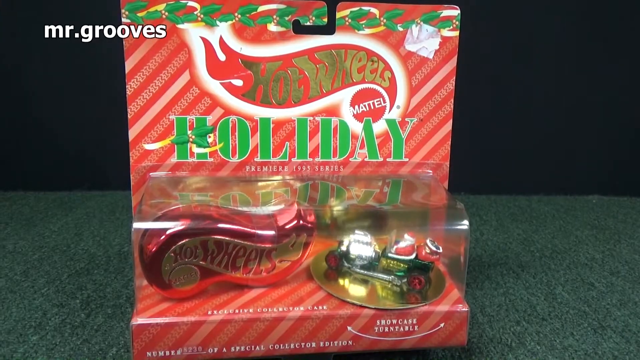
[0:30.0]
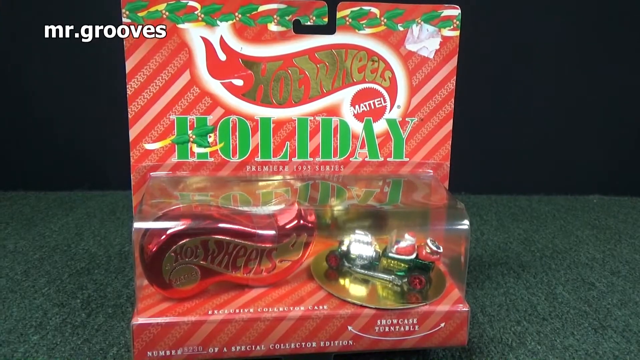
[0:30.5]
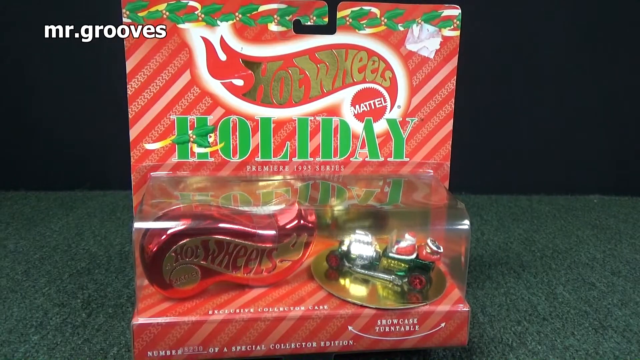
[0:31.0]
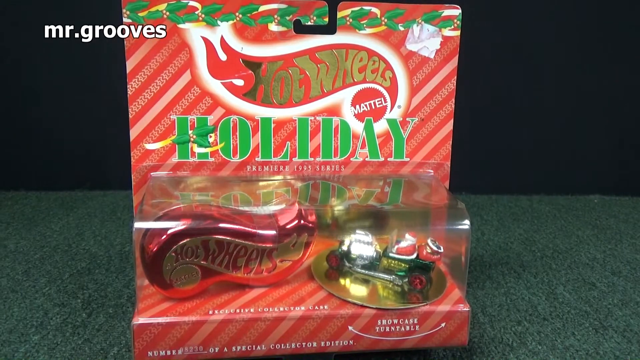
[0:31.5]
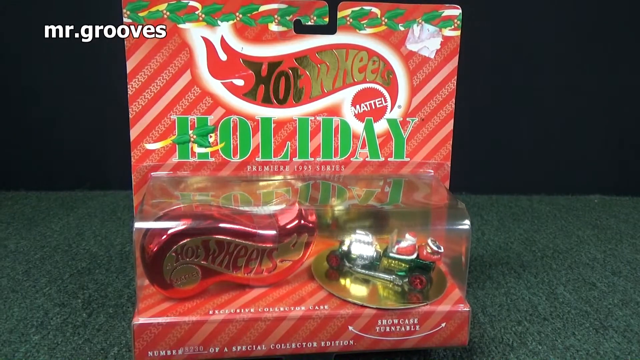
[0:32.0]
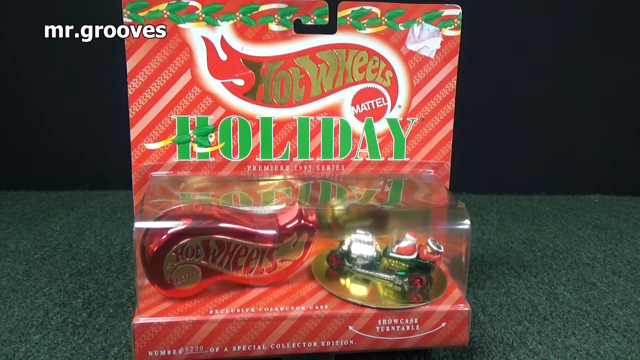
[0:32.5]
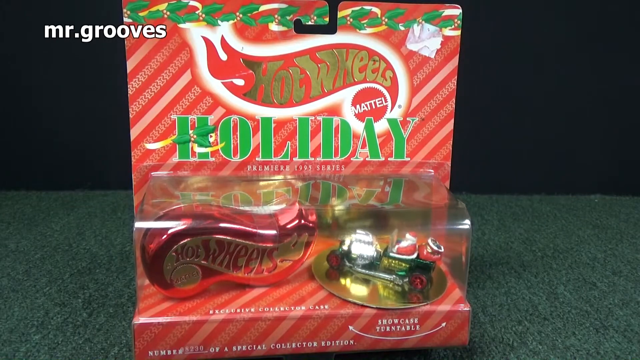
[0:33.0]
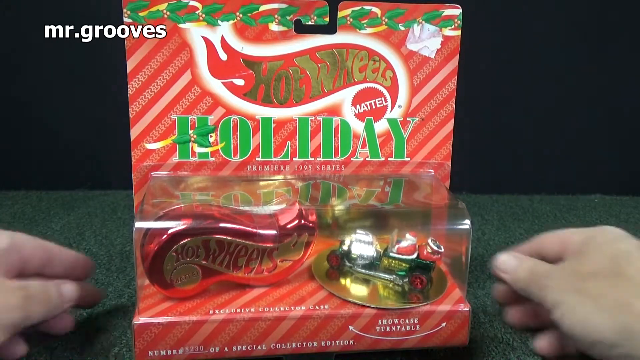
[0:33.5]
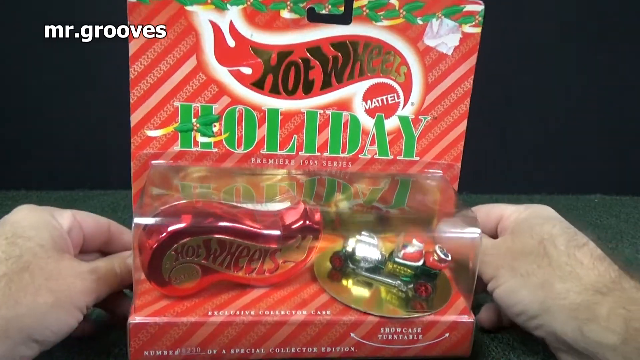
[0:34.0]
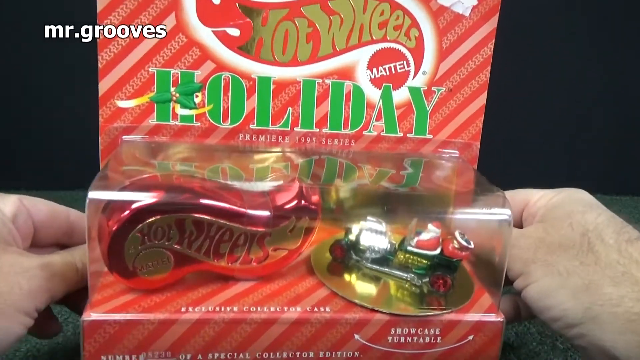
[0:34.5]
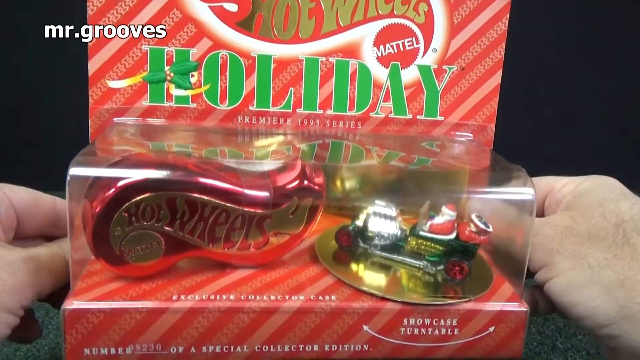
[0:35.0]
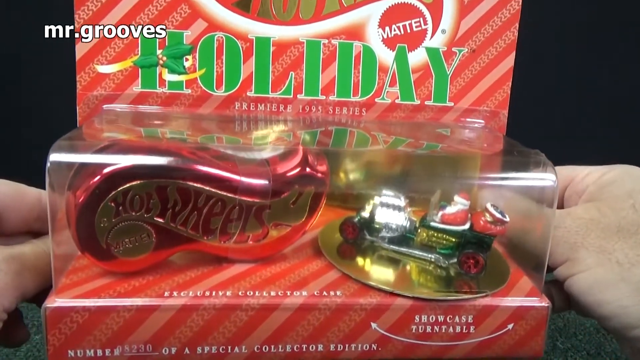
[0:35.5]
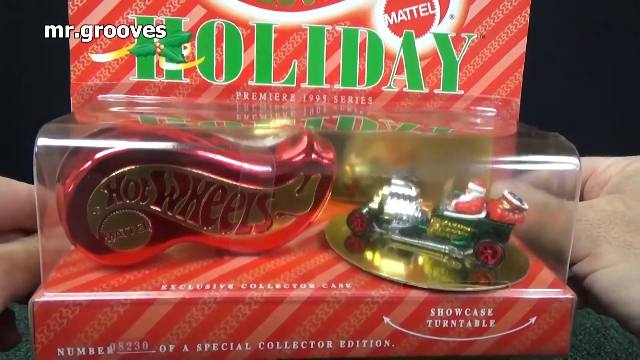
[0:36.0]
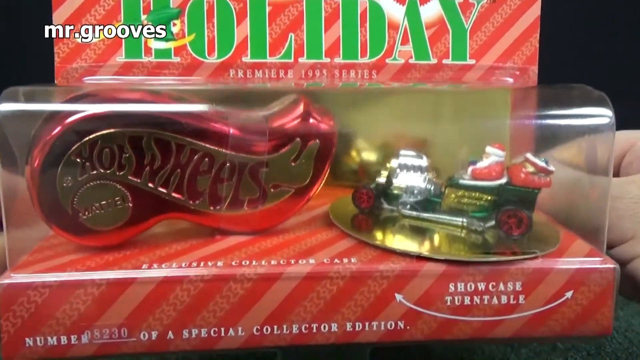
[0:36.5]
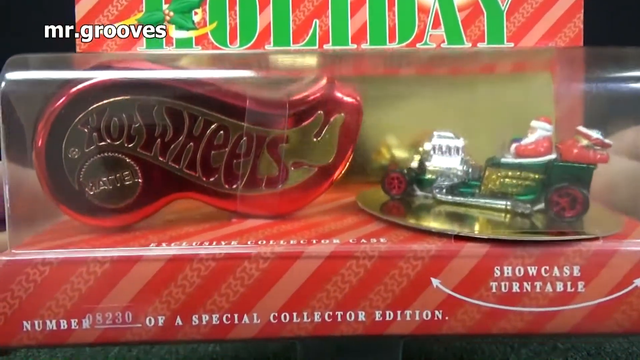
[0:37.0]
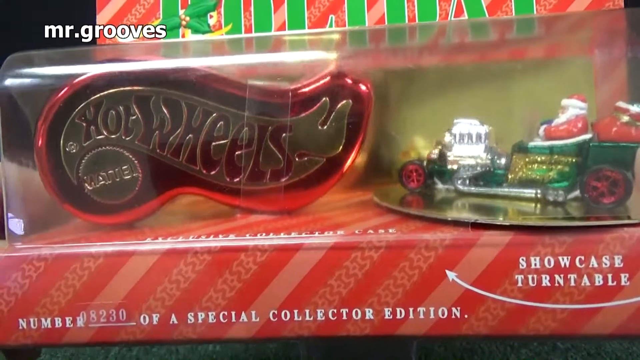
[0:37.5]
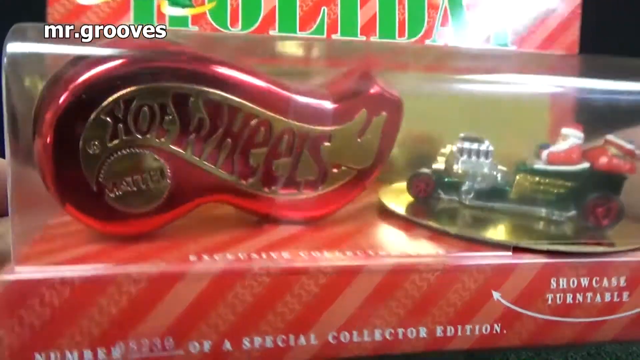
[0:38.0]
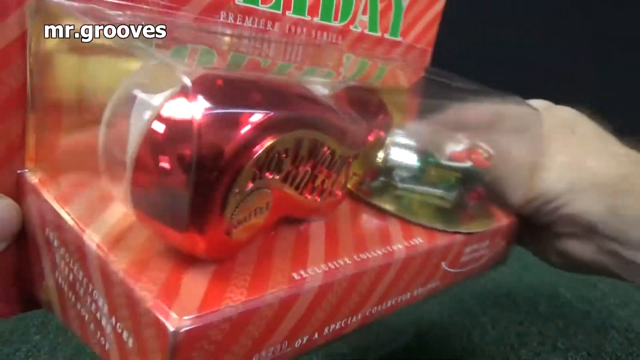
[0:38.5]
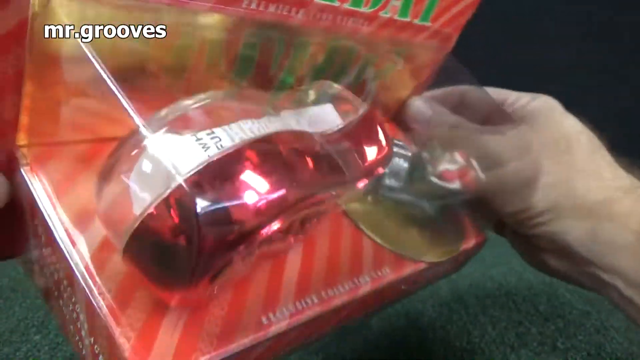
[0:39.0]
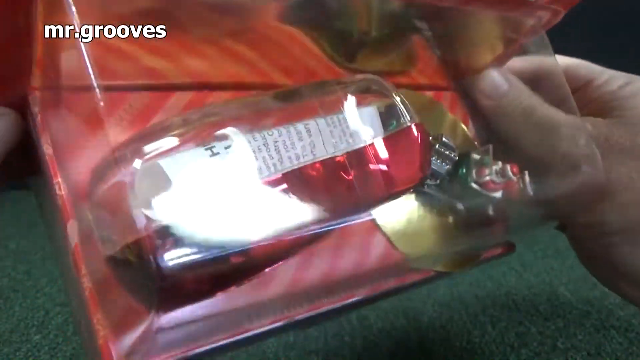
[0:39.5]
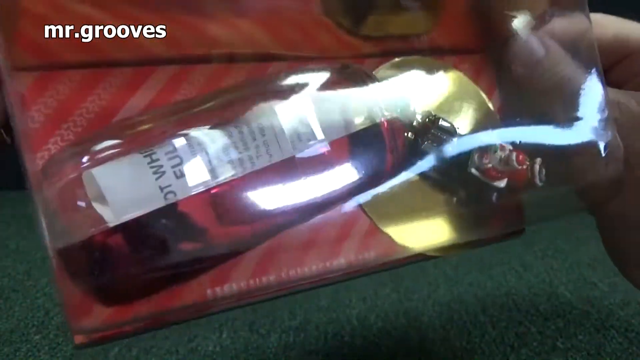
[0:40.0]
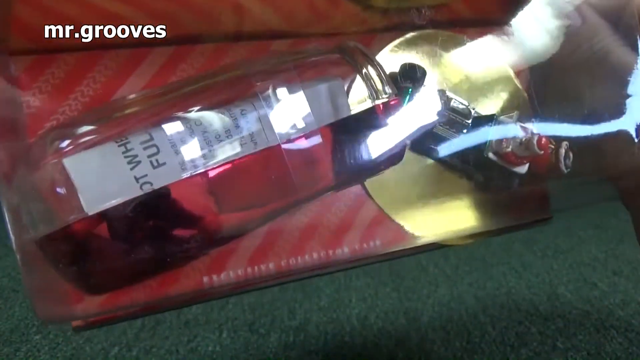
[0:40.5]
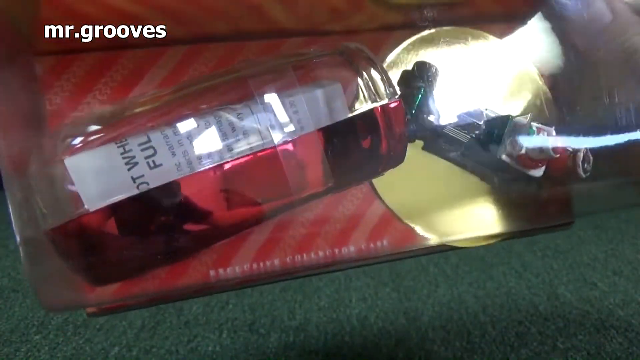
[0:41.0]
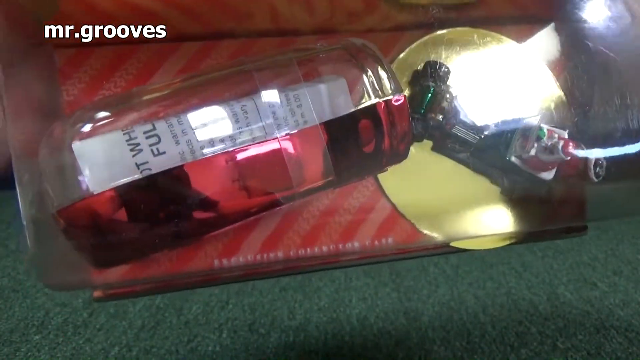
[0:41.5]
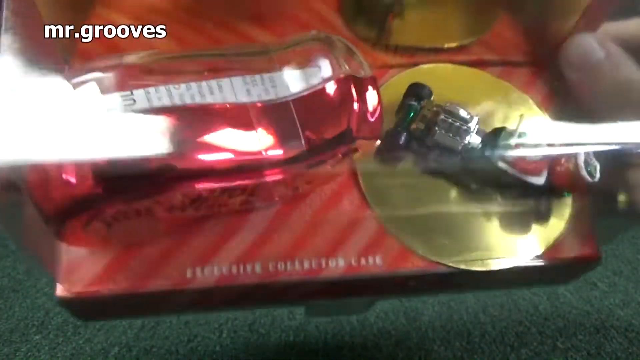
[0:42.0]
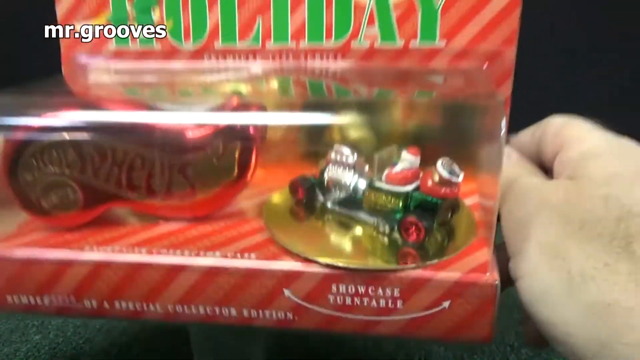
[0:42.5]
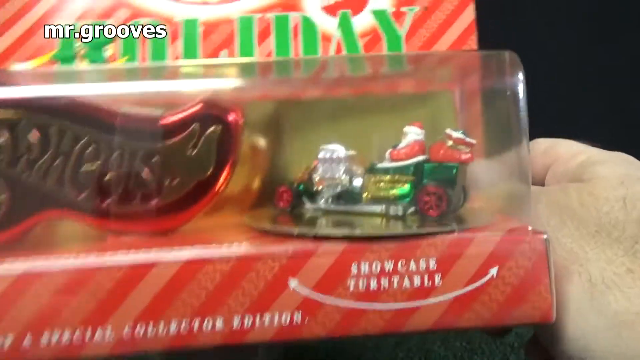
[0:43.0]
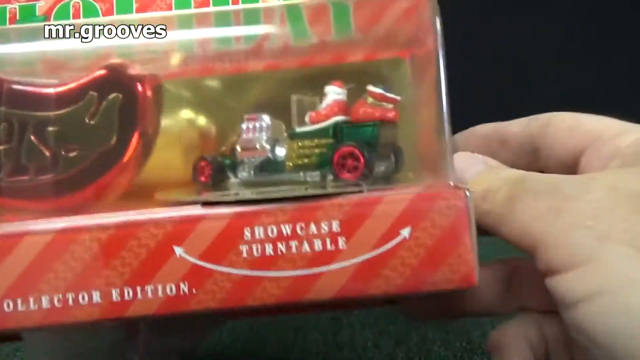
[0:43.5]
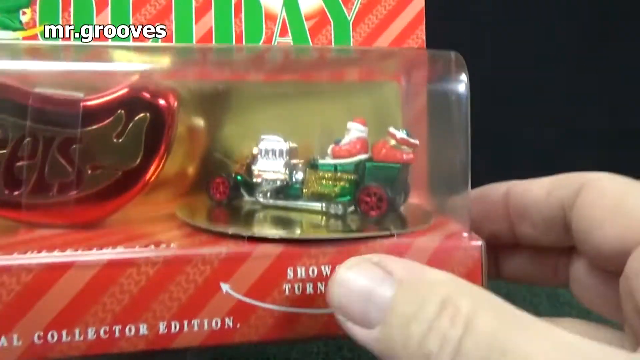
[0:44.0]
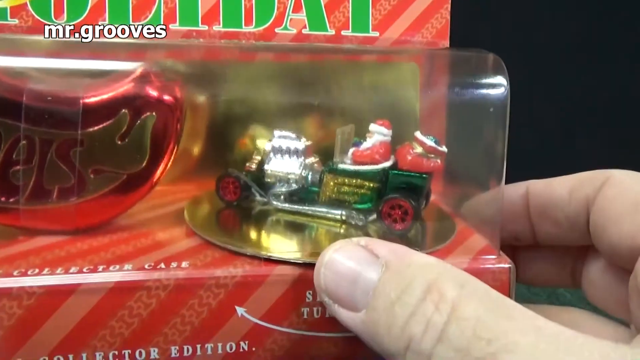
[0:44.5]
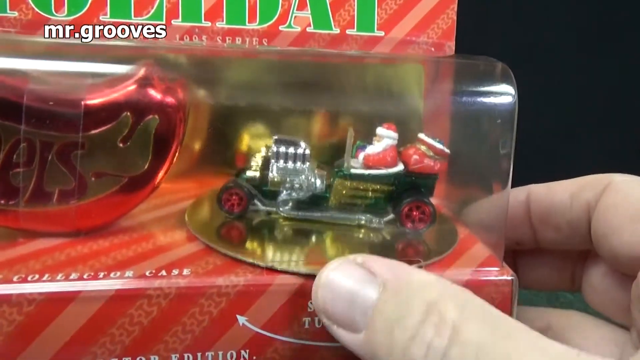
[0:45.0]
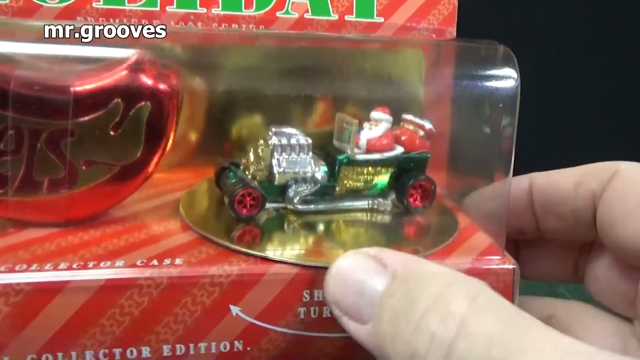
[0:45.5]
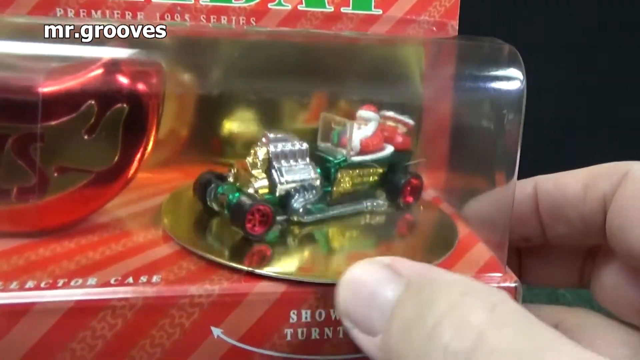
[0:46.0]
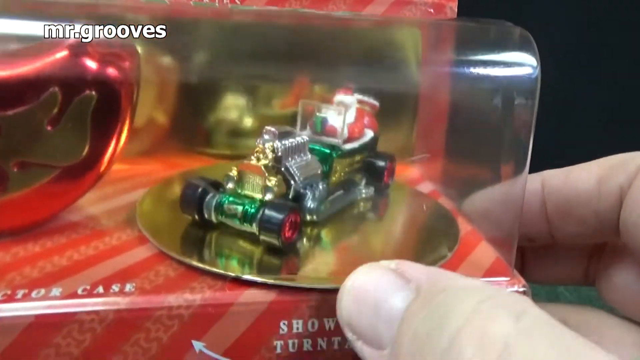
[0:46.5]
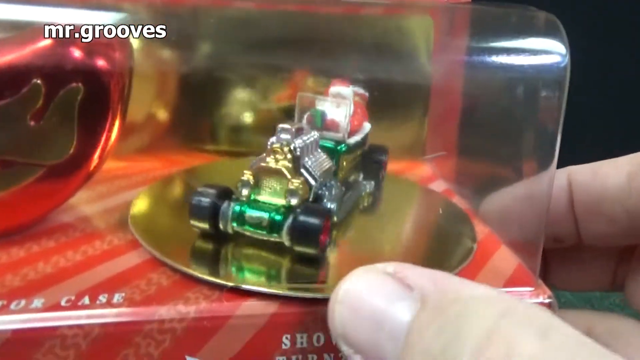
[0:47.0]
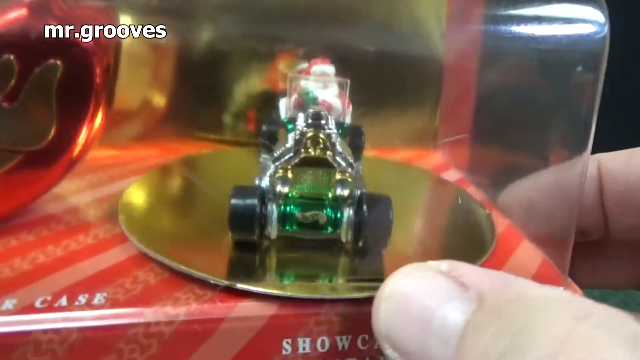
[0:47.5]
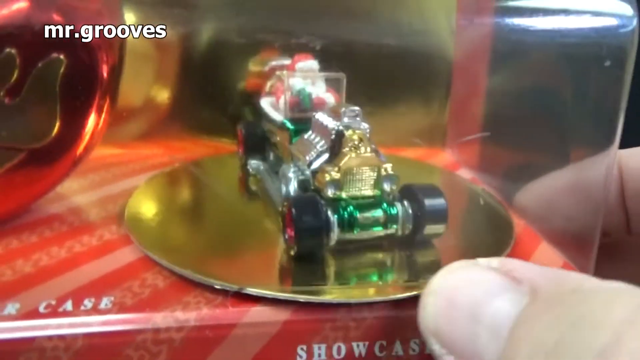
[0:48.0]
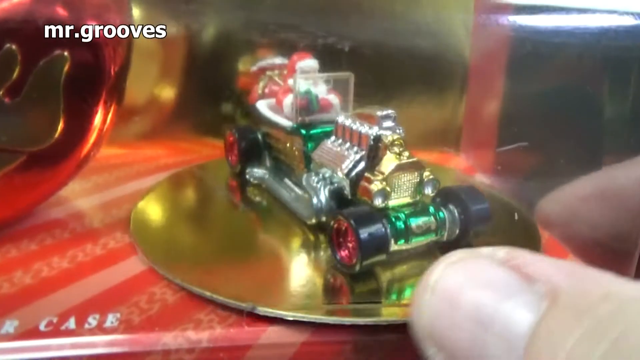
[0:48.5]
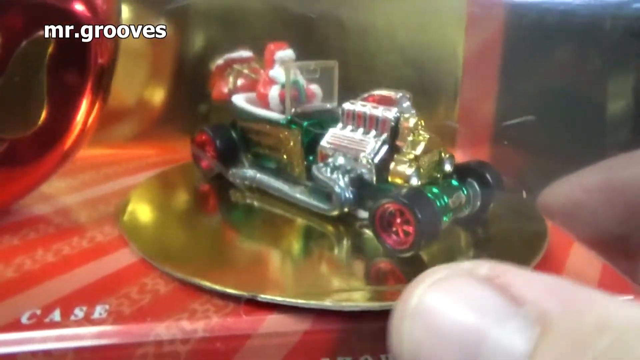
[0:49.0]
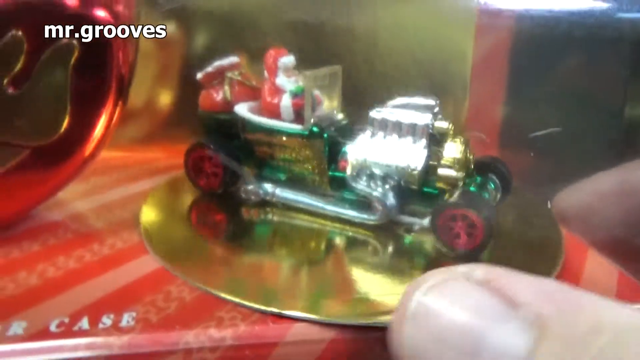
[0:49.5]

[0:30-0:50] A Hot Wheels Holiday Edition package is shown: a white candy-cane package with "holiday" written in green letters, in a festive holiday red color. Inside the package are a shiny red Hot Wheels car and a green one on a gold platter. Two hands pick up the packaging and bring it close to the camera. Under the green "holiday" lettering, "Premier 1993 series" is visible, and under the green car on the gold platter there is text beginning "showcase." A hand turns the gold platter. Text at the bottom of the packaging mentions a "special collector edition." The hand keeps turning the gold platter and shows the top and the sides of the packaging.